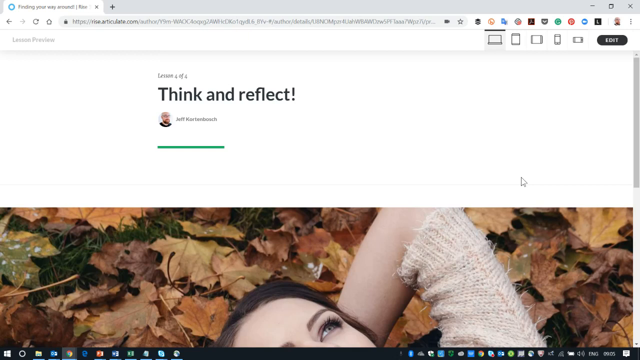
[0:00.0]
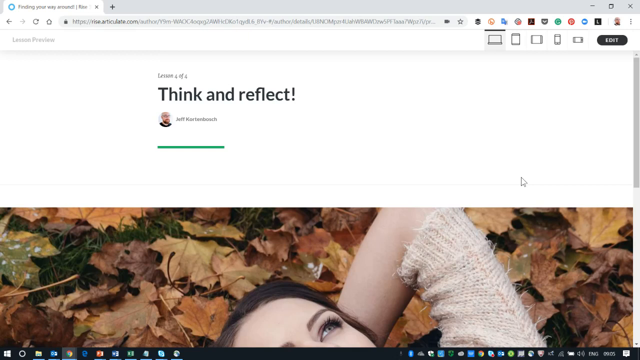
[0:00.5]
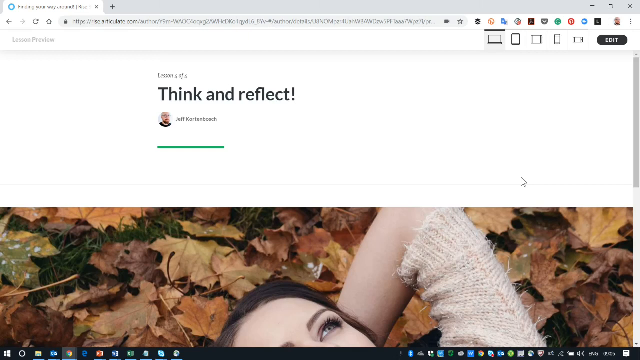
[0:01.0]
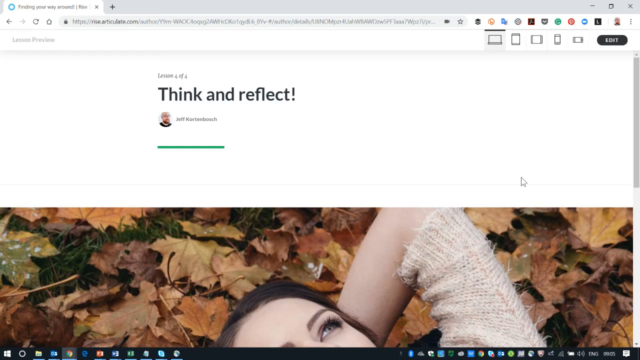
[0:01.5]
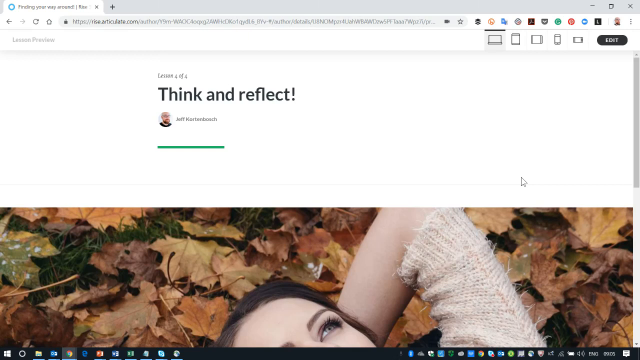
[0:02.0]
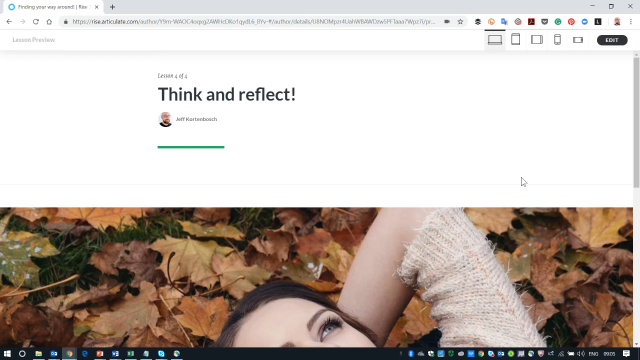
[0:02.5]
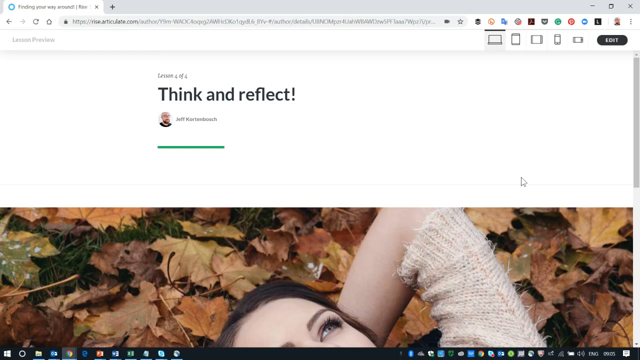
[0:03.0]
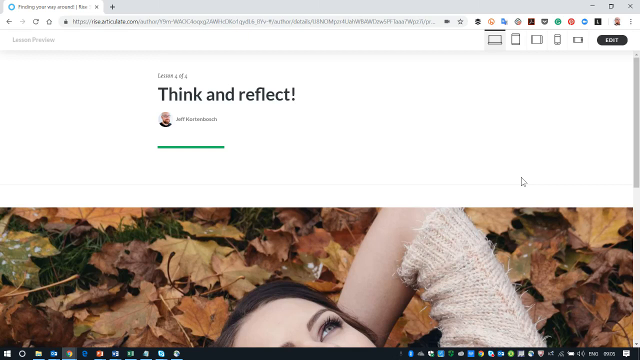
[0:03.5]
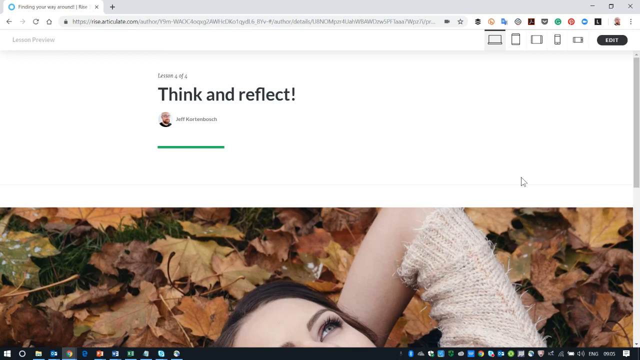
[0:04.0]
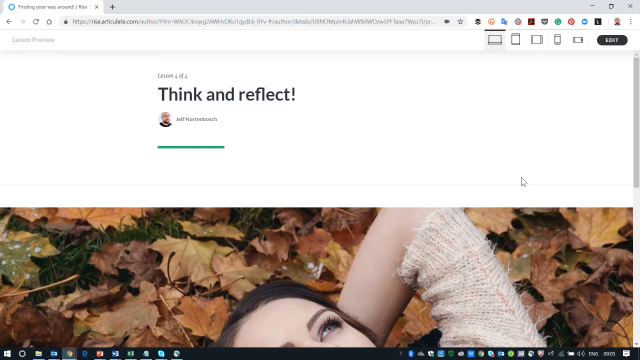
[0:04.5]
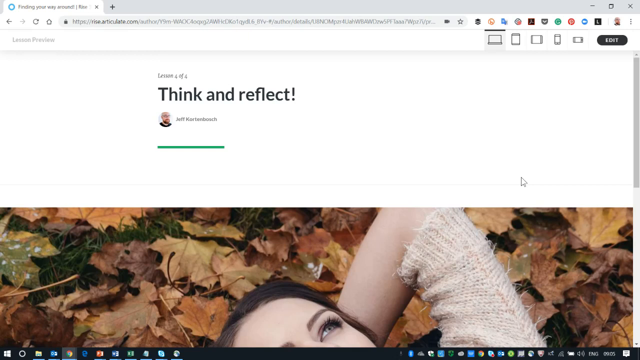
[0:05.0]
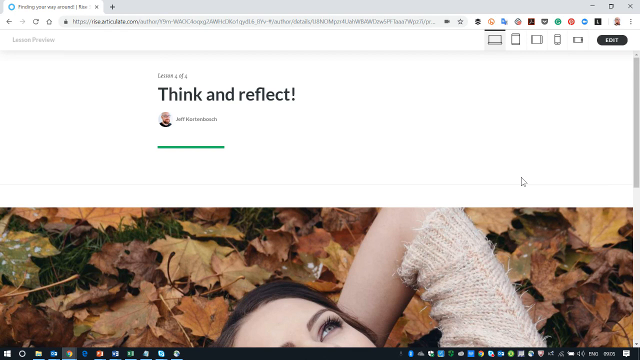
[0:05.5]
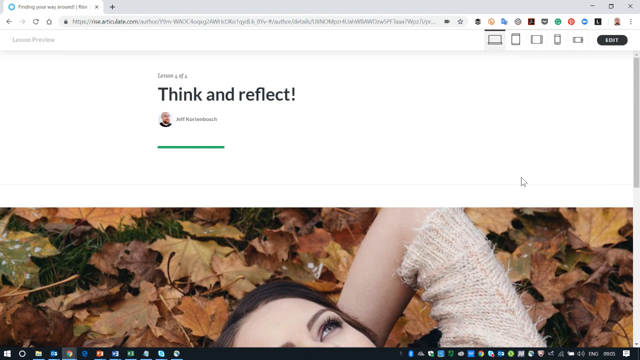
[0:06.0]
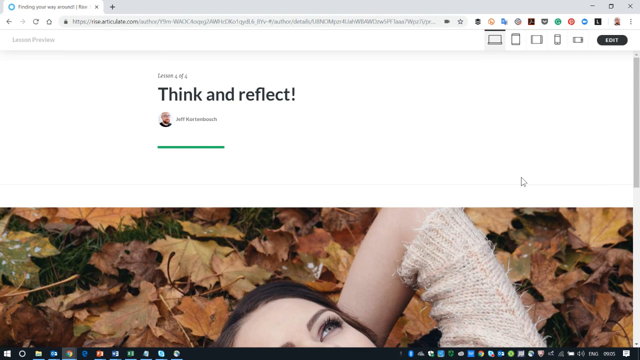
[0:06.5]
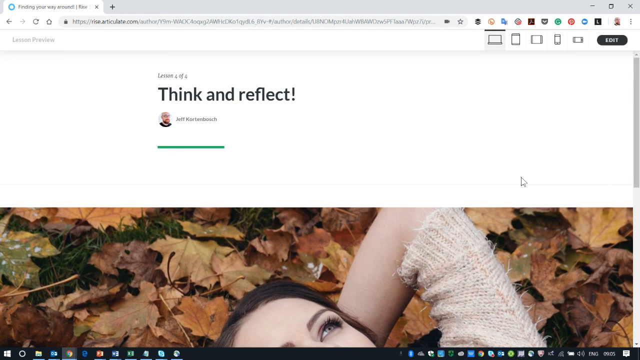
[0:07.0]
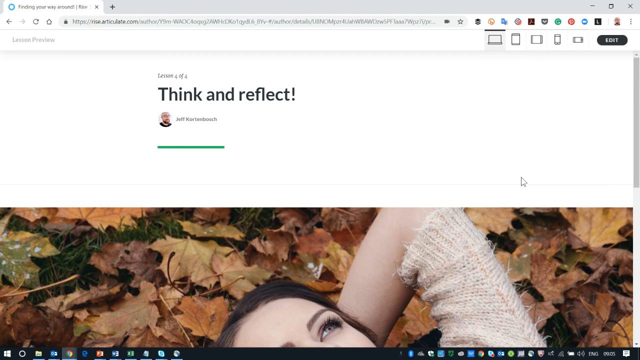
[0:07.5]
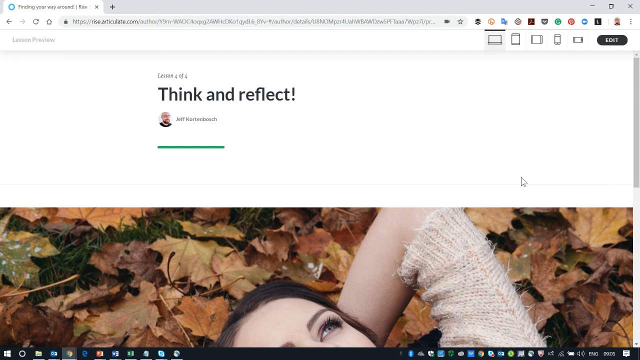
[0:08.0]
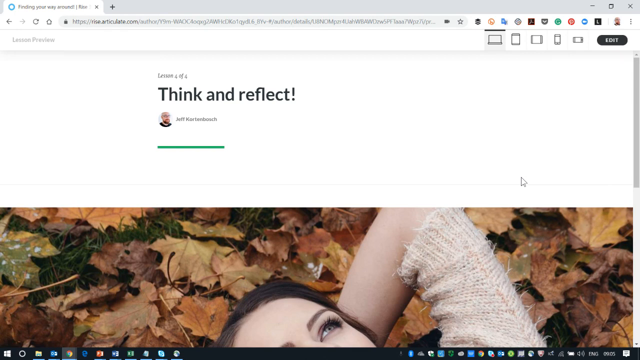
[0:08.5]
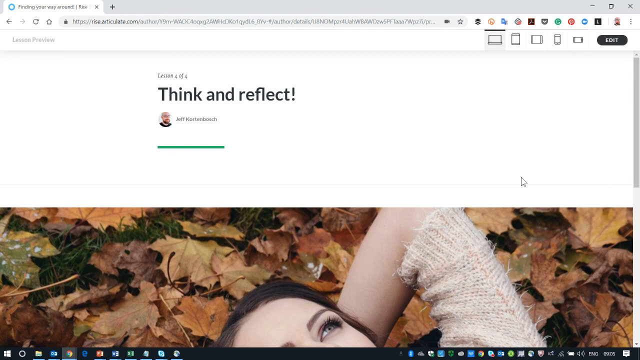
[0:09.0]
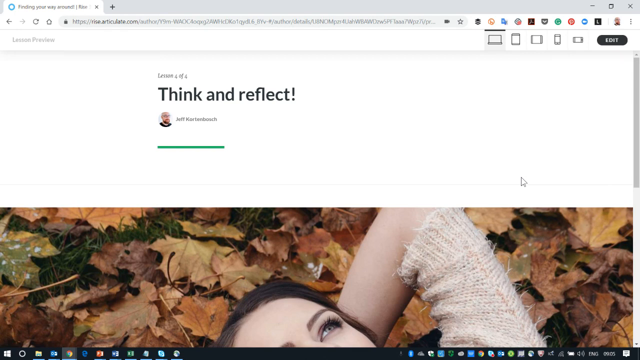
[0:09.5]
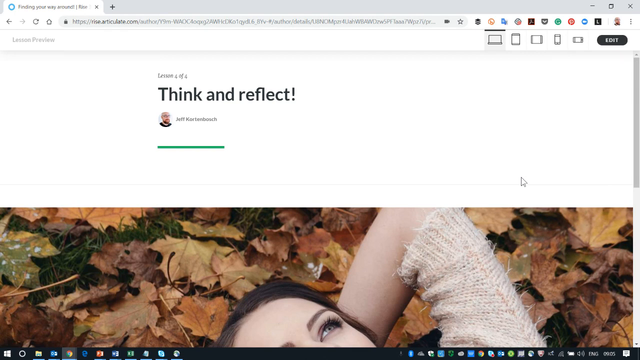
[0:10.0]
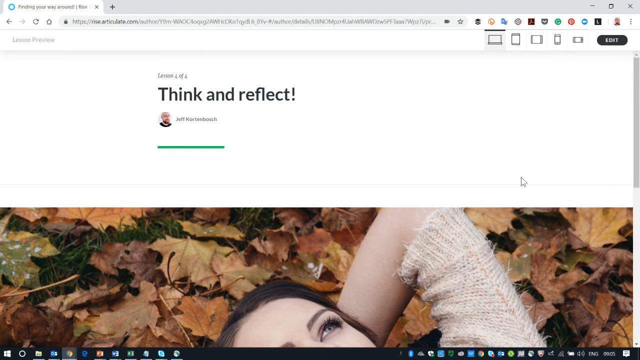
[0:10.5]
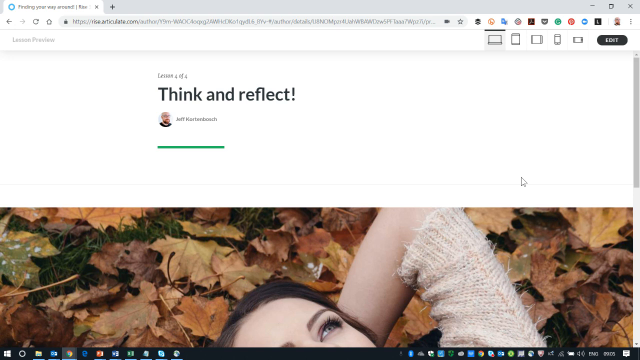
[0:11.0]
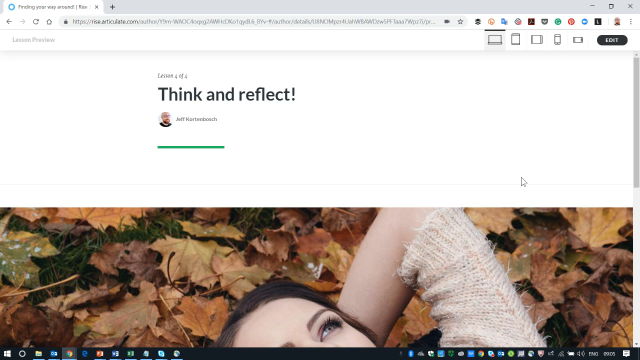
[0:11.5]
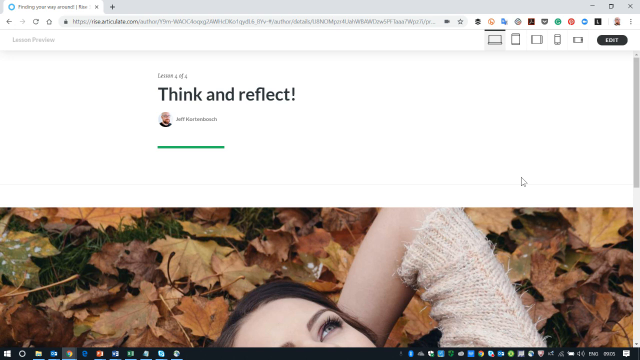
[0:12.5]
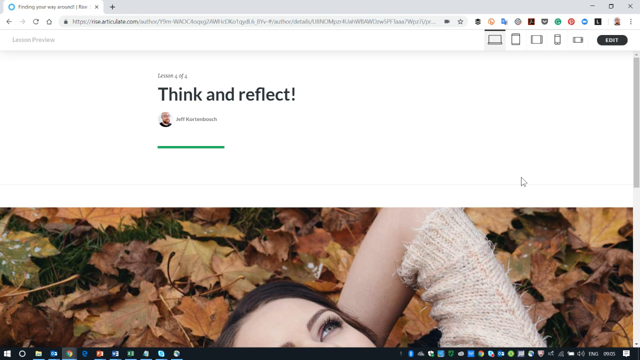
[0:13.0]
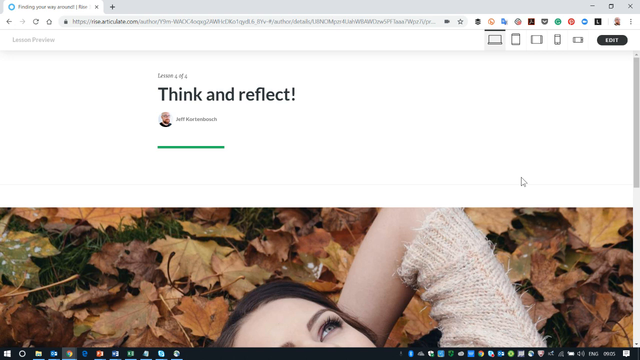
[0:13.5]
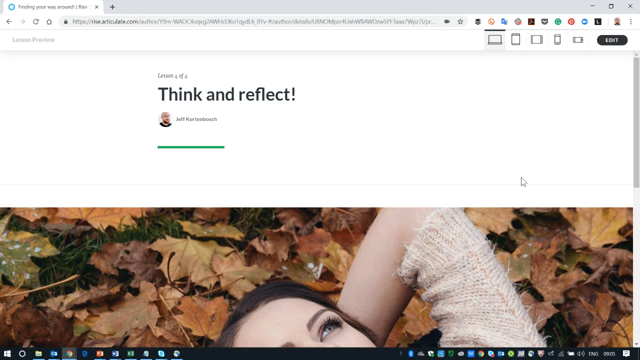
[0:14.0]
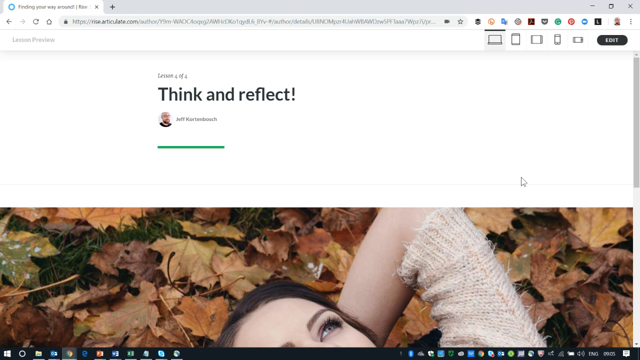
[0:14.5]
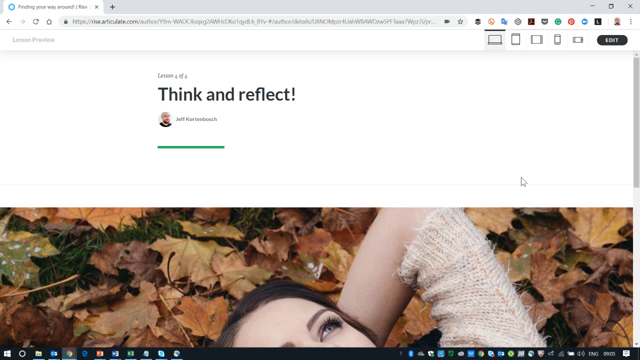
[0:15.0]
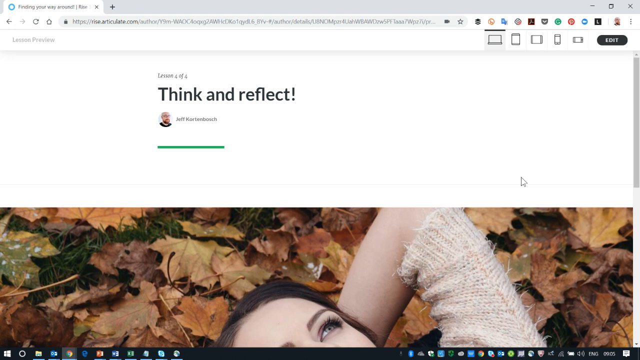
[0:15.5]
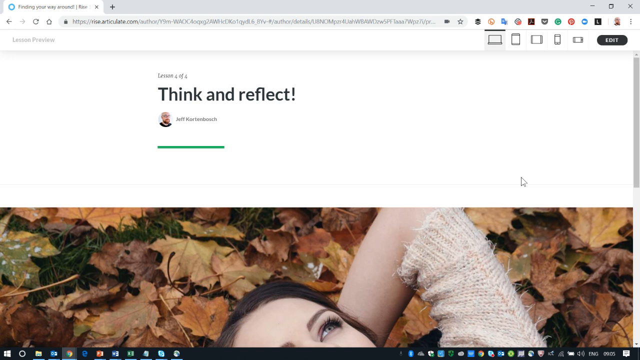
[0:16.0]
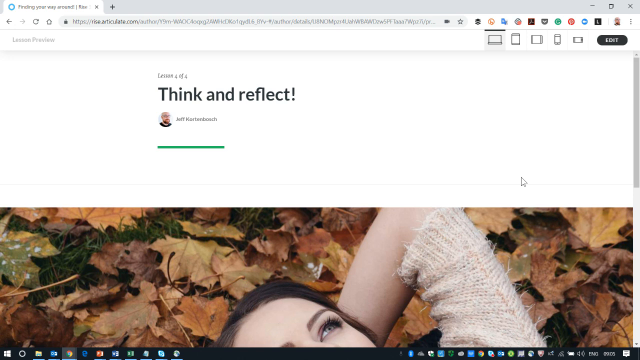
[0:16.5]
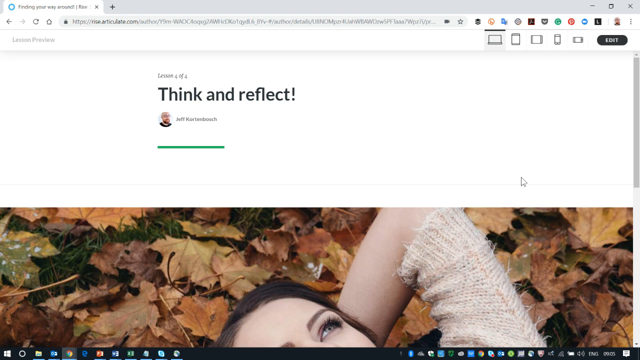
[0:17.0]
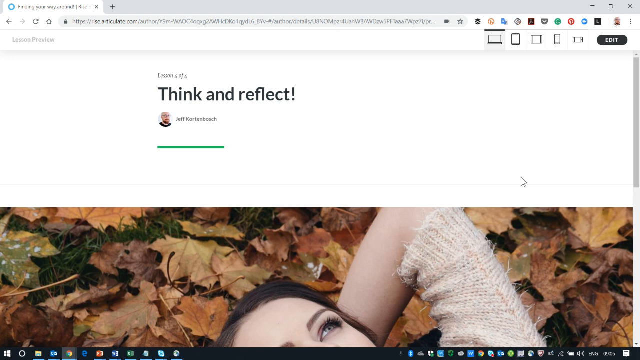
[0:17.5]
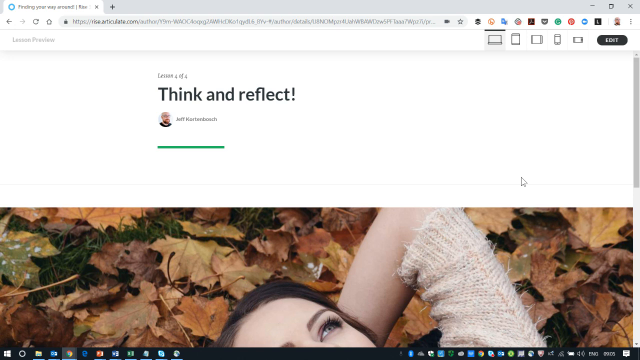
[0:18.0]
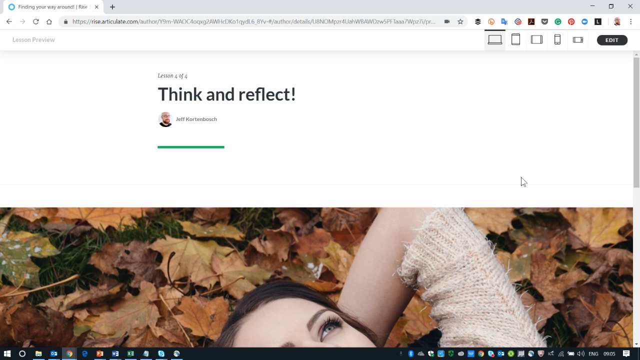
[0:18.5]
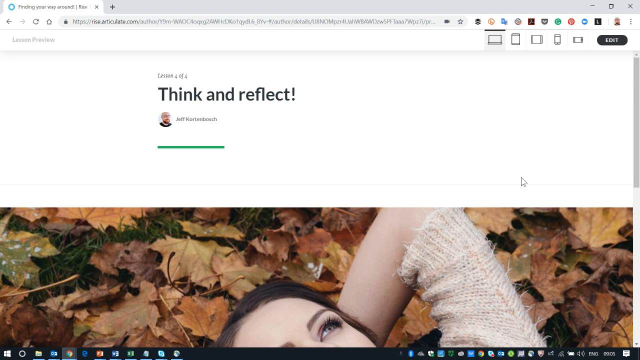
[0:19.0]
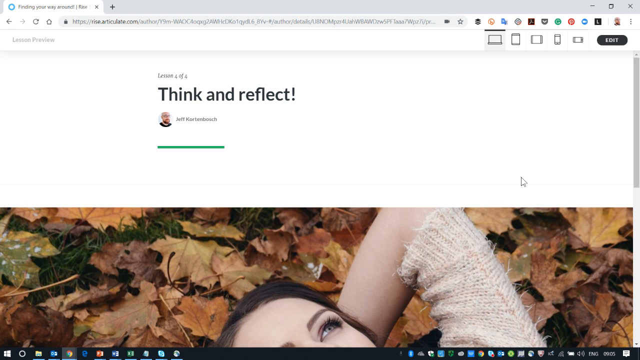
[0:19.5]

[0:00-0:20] A lady and the profile of a man appear in the video. The lady is lying down. There is a photo or profile picture of someone called Jeff, with a green colour under his name. The content is presented on a website, open in a tab of a browser, with options to edit and to search. This is an introduction to think and reflect, which is covered in four lessons, four out of four.